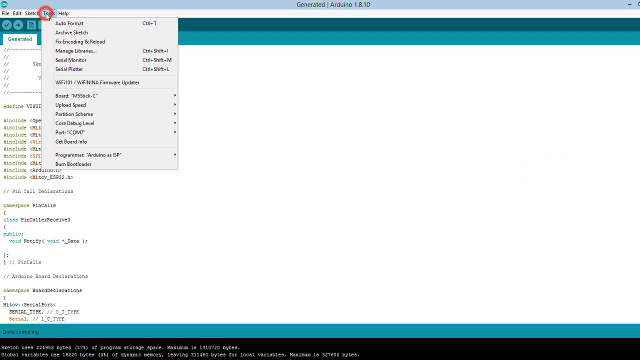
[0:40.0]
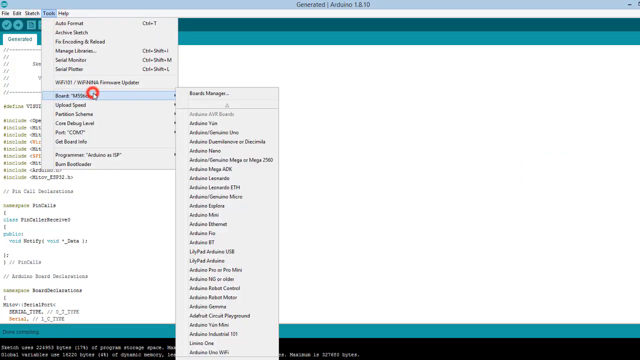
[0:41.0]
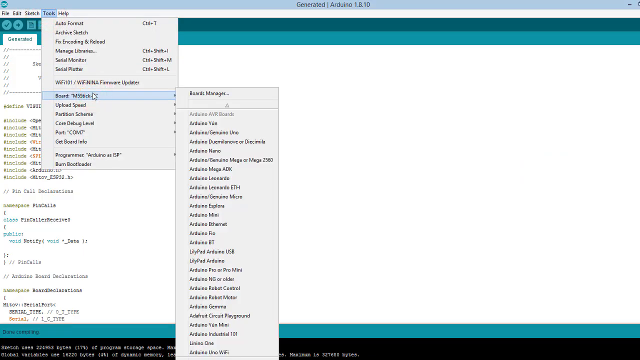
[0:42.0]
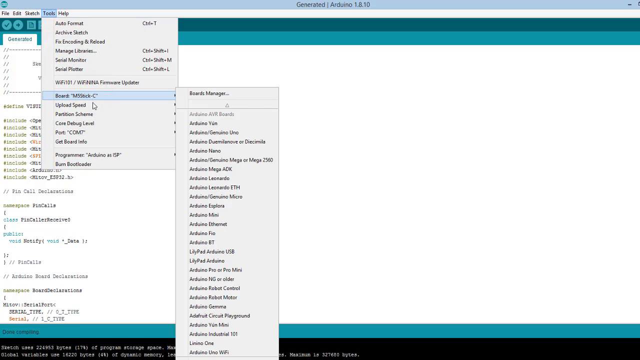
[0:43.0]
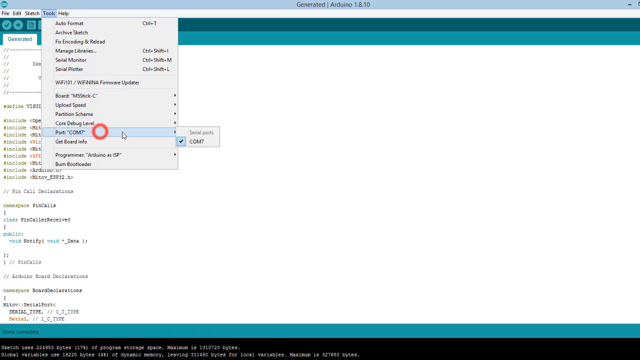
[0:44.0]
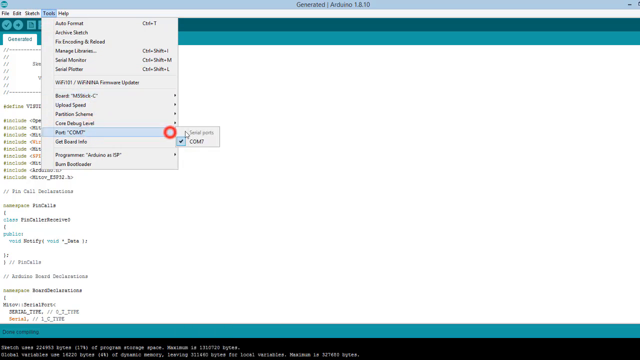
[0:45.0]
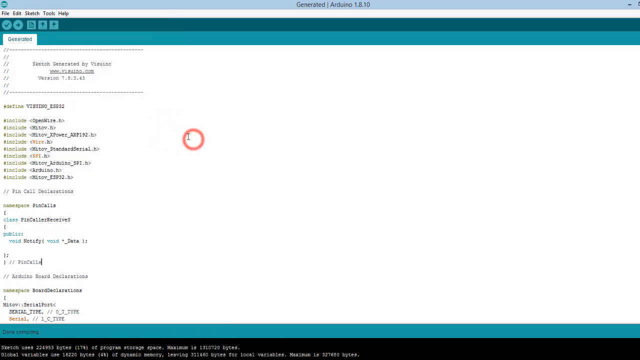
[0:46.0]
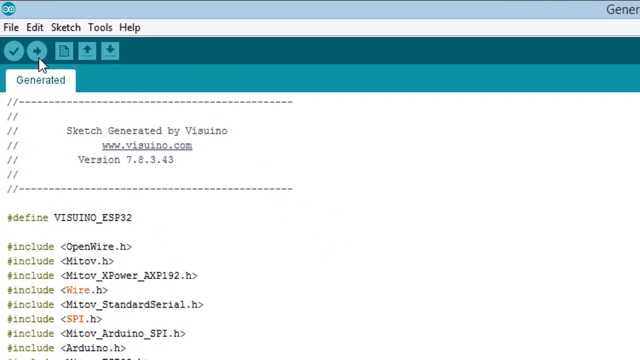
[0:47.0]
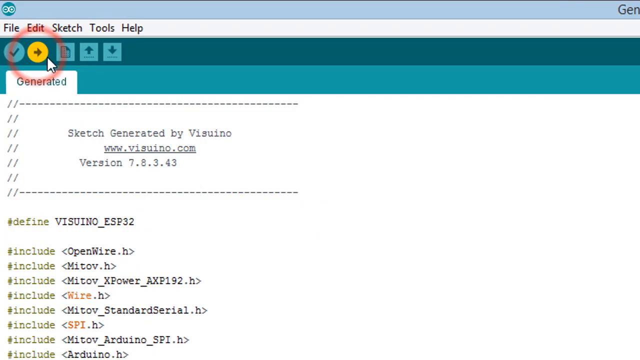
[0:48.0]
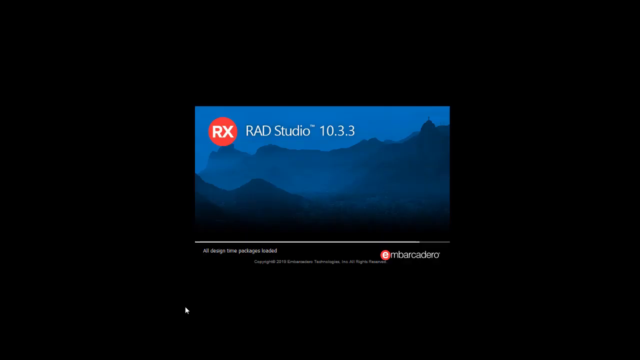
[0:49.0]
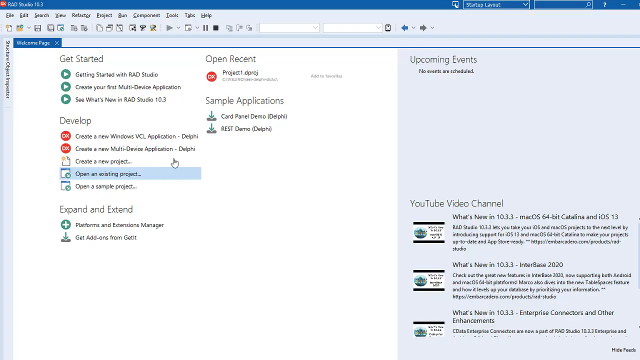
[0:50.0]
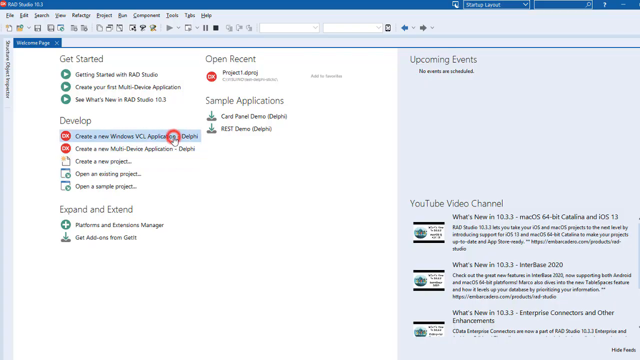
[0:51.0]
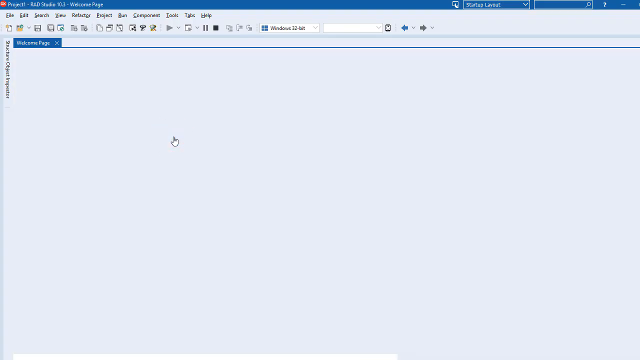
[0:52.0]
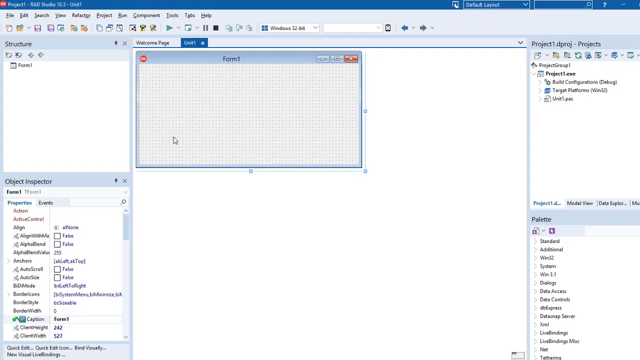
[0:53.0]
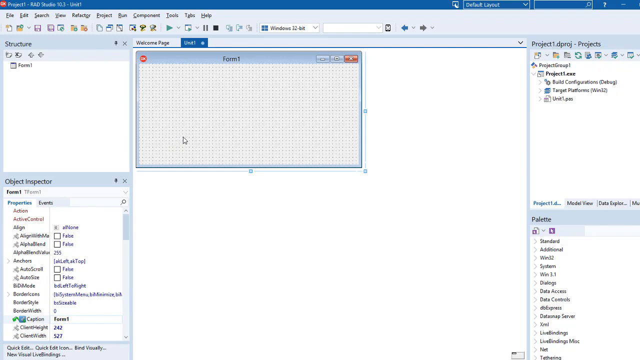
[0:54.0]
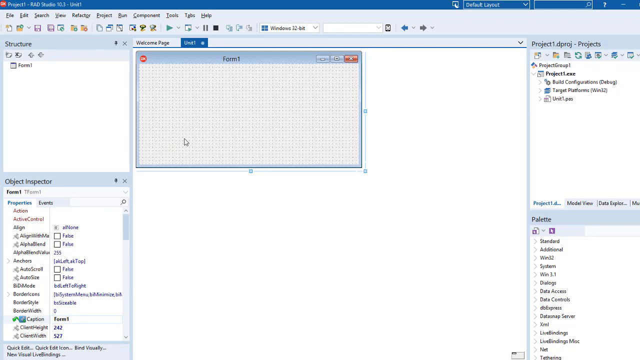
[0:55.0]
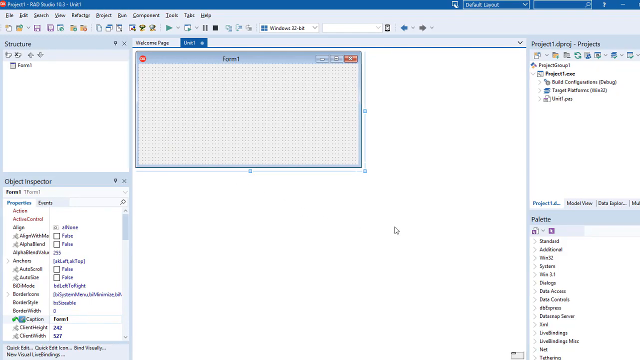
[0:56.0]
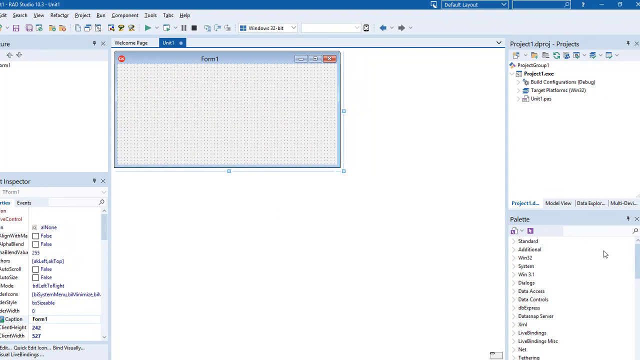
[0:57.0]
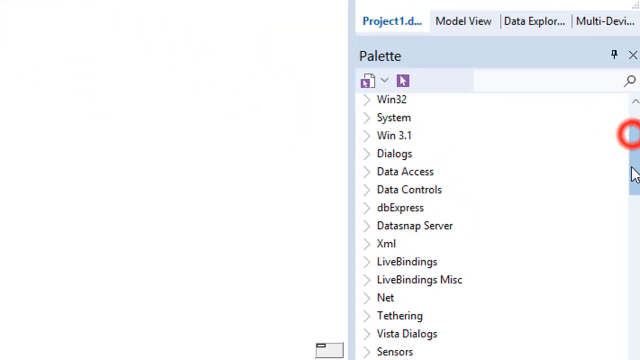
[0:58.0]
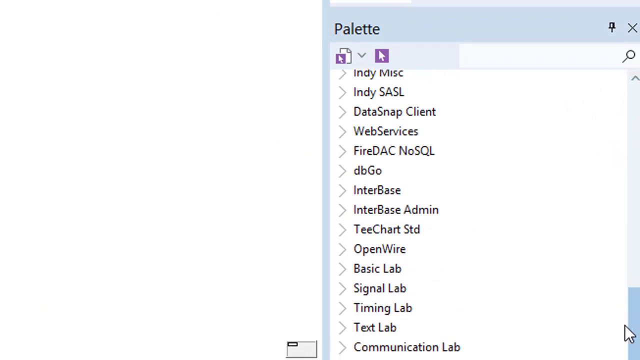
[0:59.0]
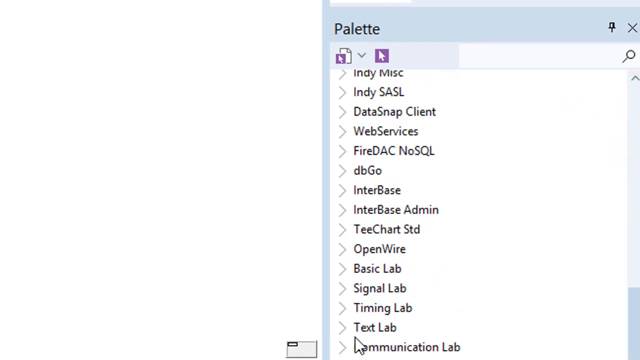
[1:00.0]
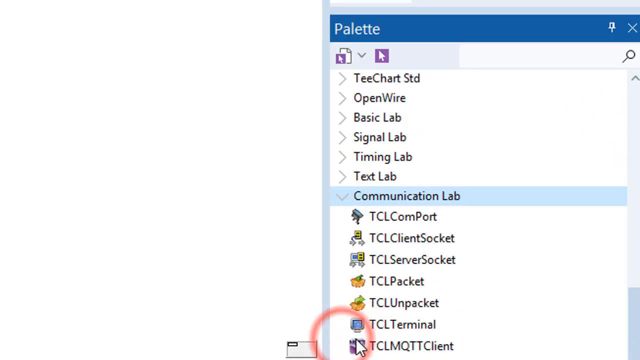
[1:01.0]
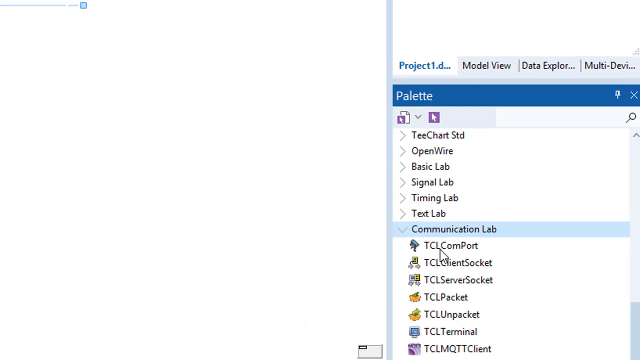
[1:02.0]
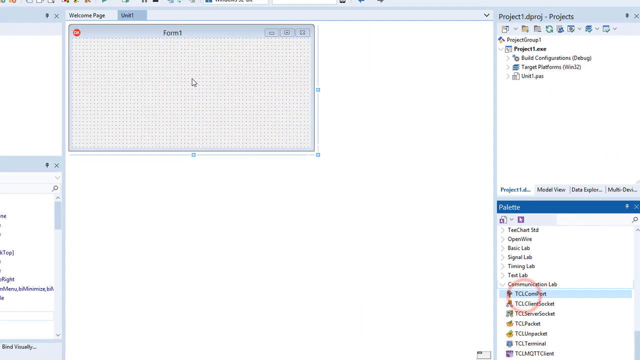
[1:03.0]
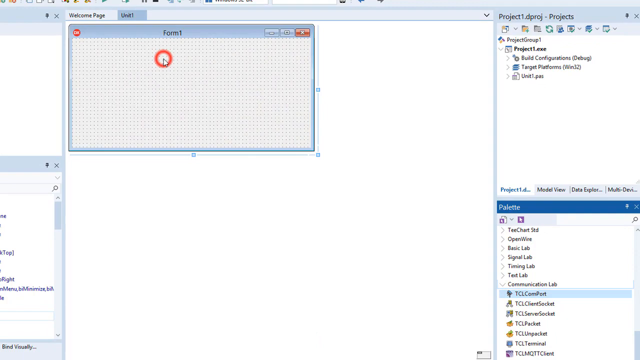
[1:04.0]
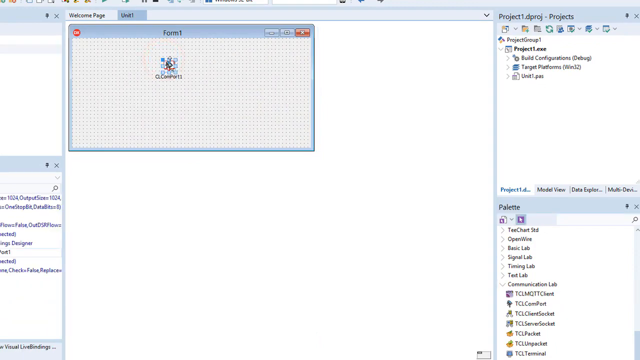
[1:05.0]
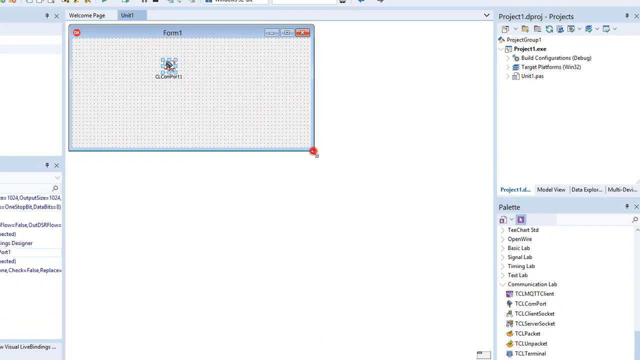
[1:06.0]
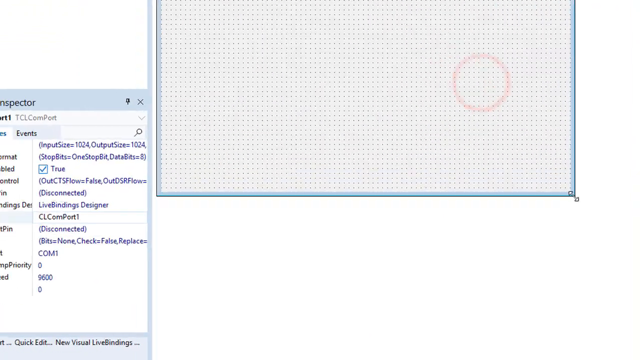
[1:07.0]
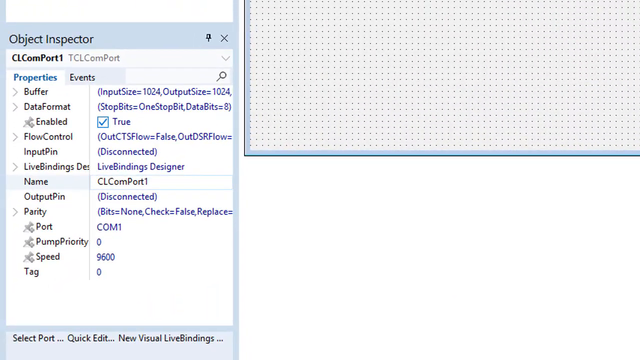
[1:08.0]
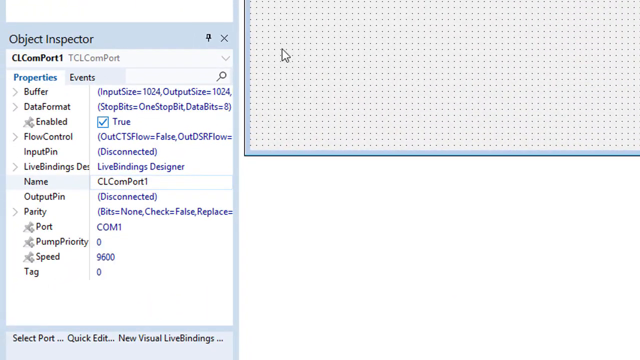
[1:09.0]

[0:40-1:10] The first frame is a bit blurry and hard to read. The user apparently clicks on tools, next to edit, then on something called board, next to help; the next item is blurry and hard to read. They click on something called "P-O-T-Con", go back to the screen and click on a right arrow, which opens RX Studio. A bunch of screens open; the words are blurry and only clear when the view zooms in, which is not often. When it zooms in on communication lab, the text is clearer. The user seems to drag something from the communication lab box into the middle of the screen. There is a screen within the screen.